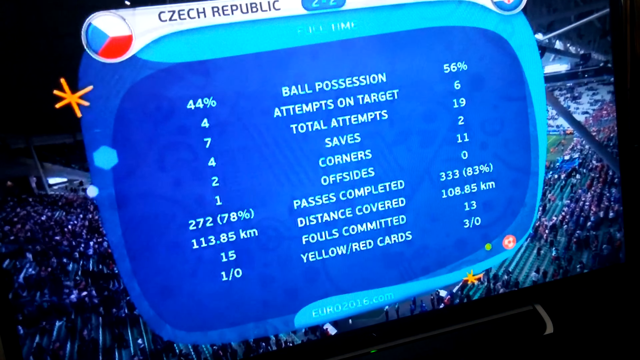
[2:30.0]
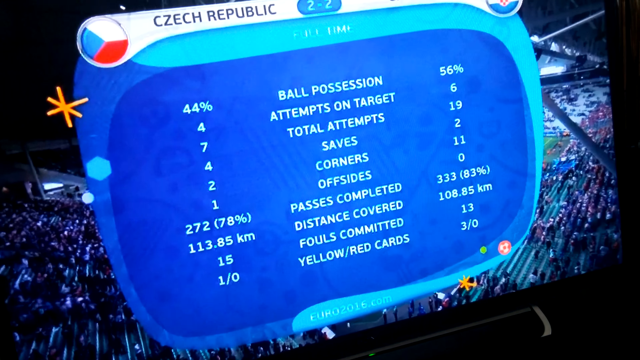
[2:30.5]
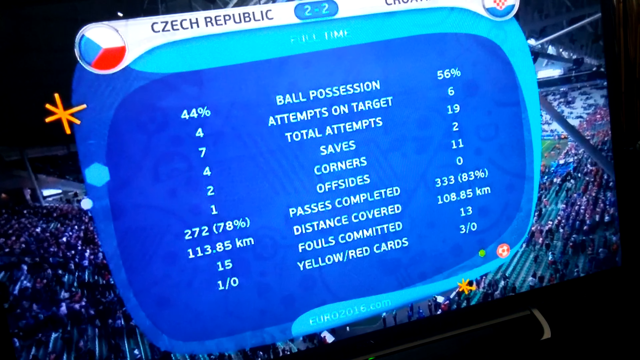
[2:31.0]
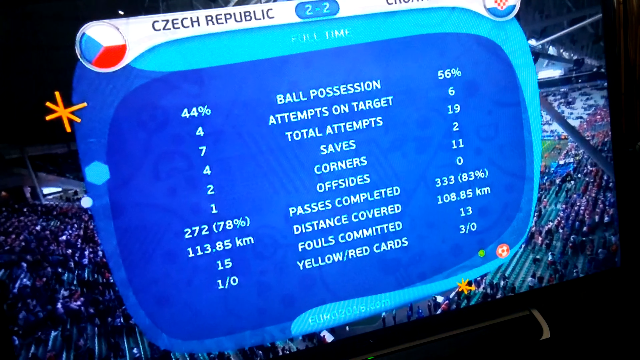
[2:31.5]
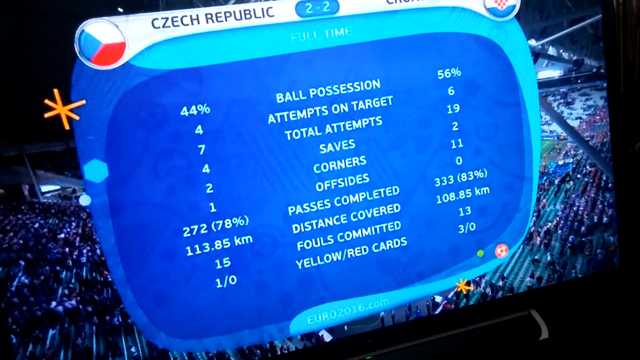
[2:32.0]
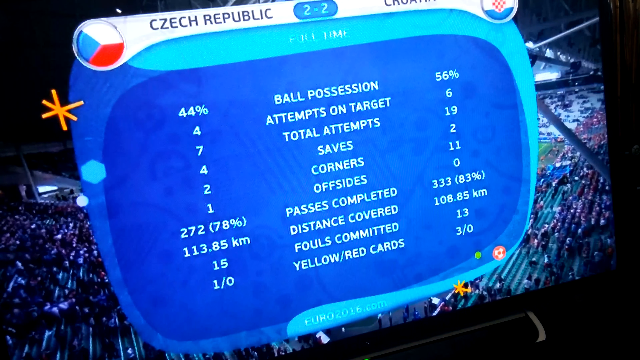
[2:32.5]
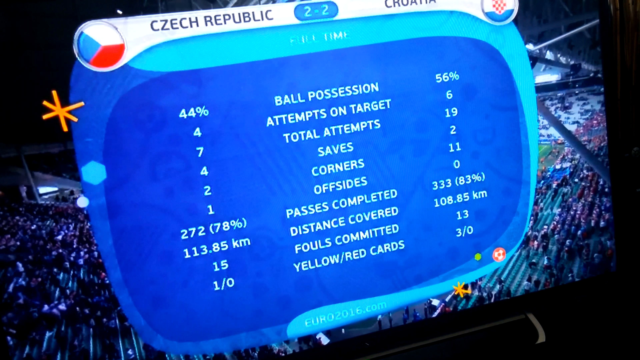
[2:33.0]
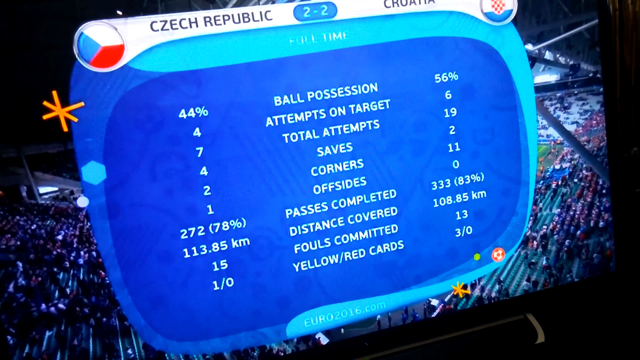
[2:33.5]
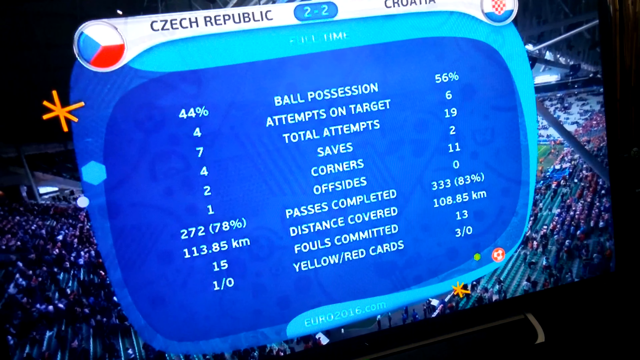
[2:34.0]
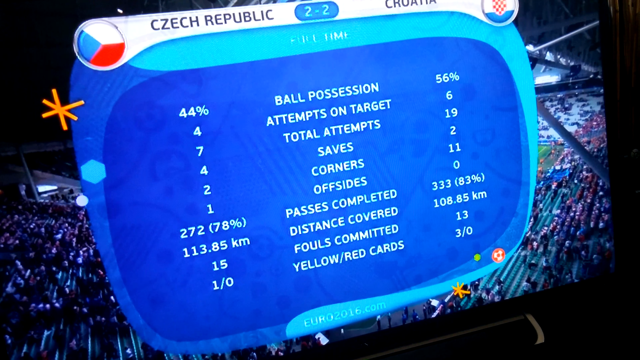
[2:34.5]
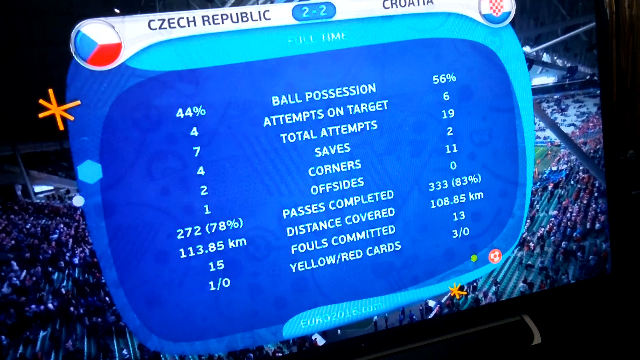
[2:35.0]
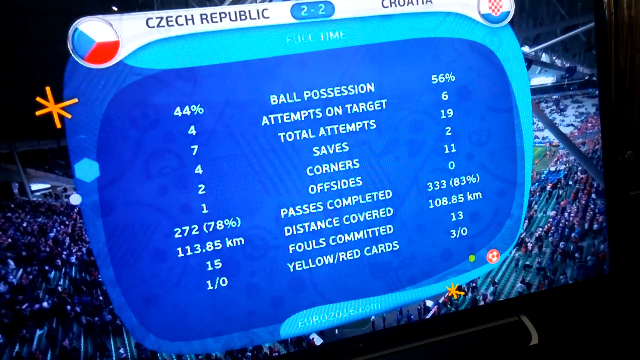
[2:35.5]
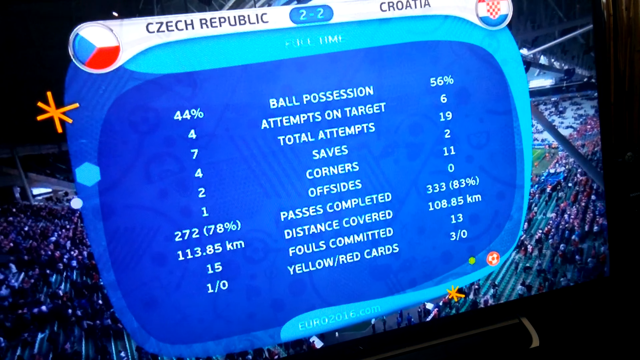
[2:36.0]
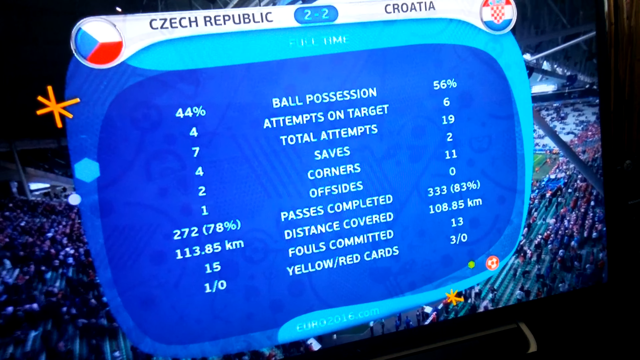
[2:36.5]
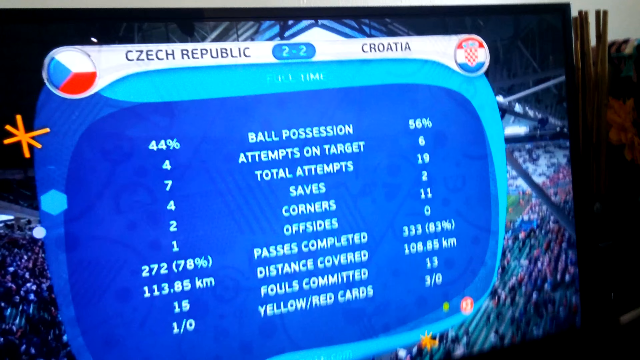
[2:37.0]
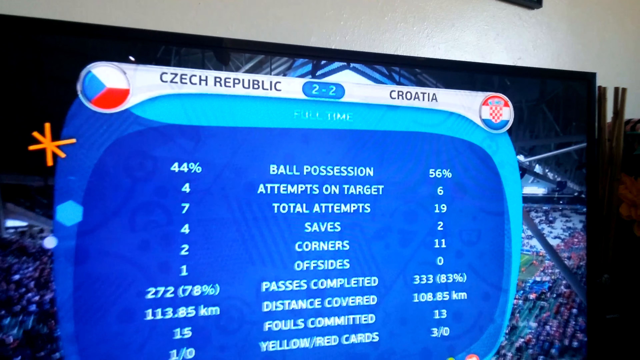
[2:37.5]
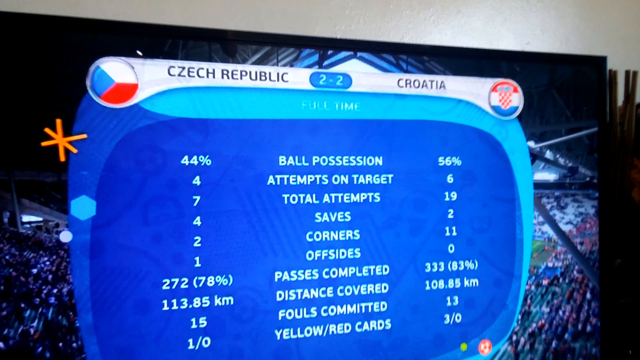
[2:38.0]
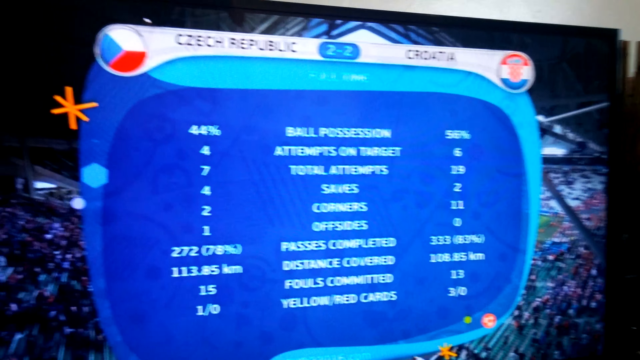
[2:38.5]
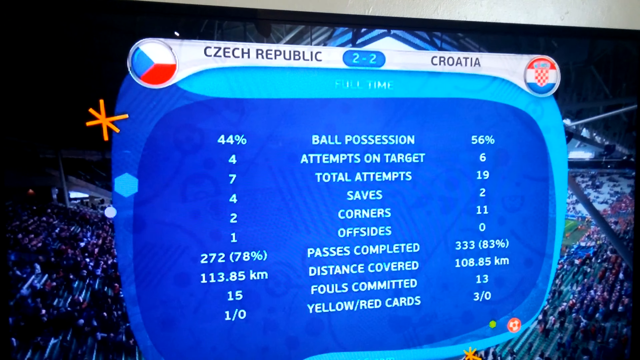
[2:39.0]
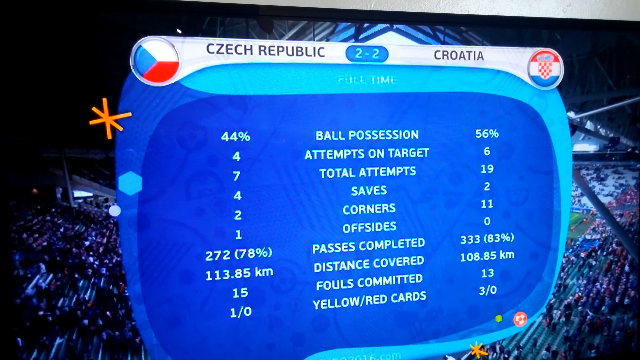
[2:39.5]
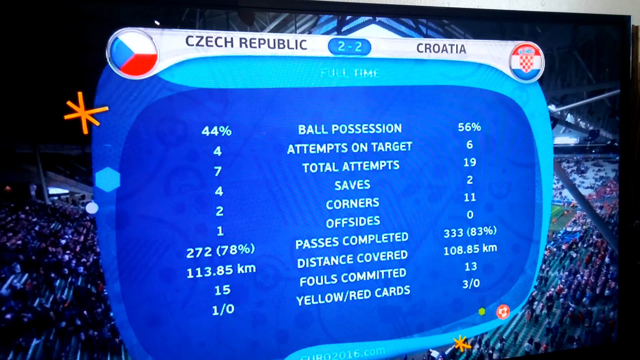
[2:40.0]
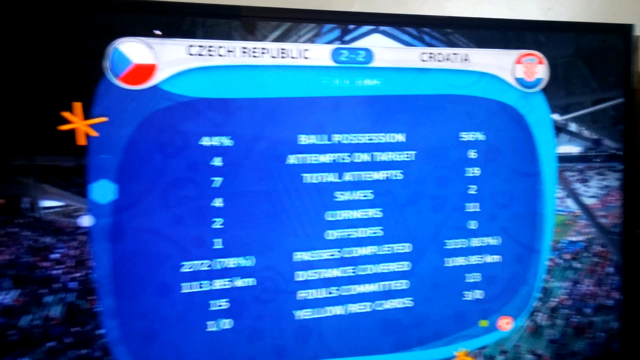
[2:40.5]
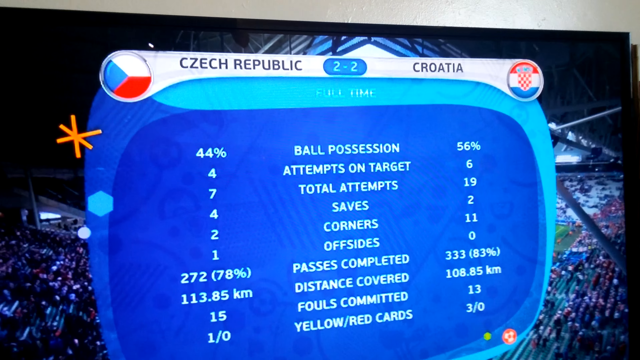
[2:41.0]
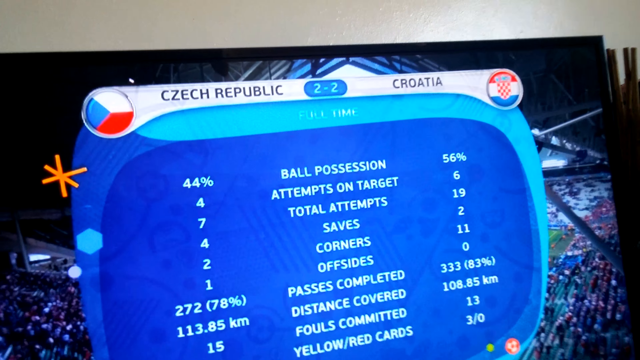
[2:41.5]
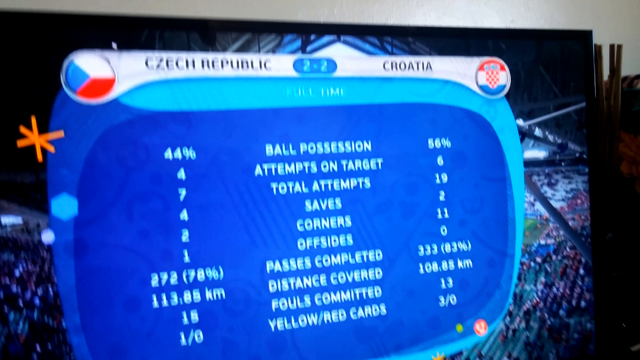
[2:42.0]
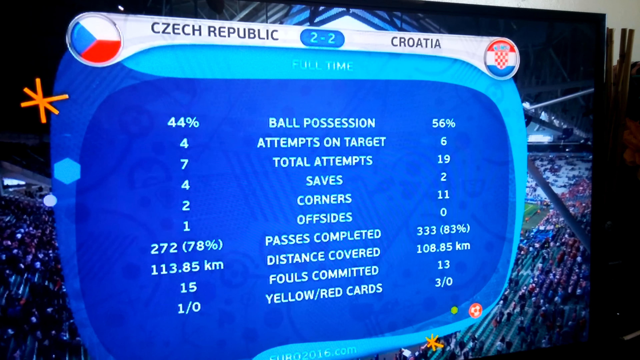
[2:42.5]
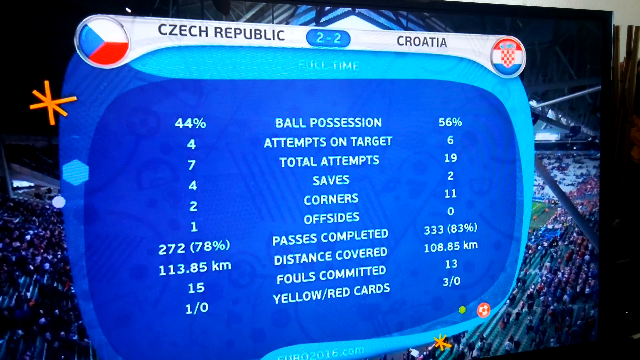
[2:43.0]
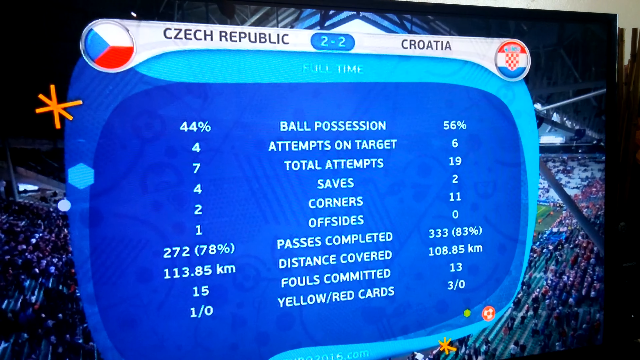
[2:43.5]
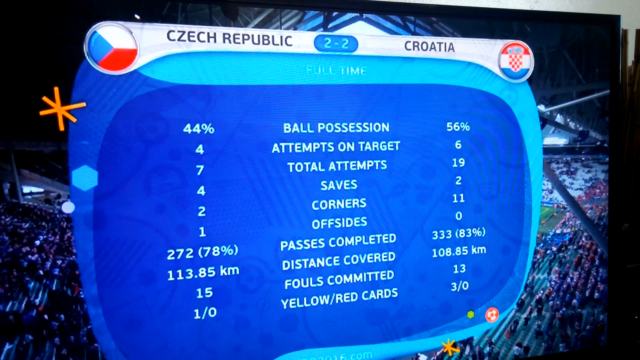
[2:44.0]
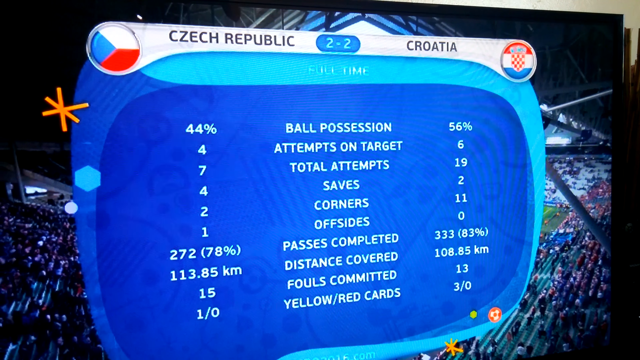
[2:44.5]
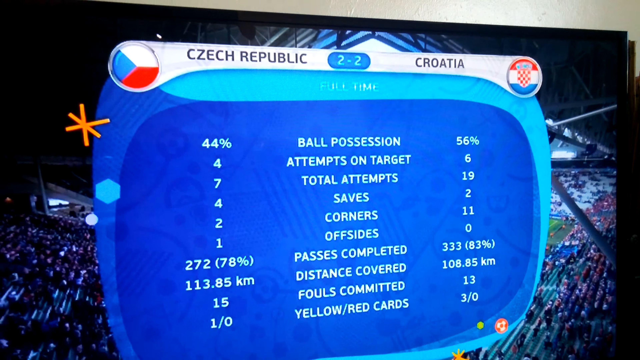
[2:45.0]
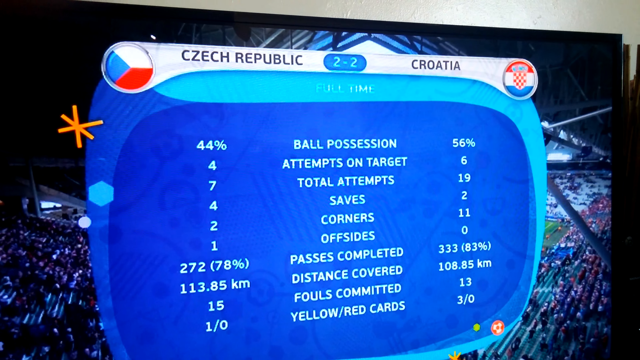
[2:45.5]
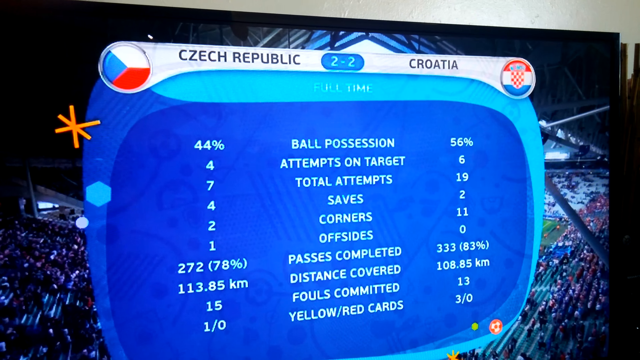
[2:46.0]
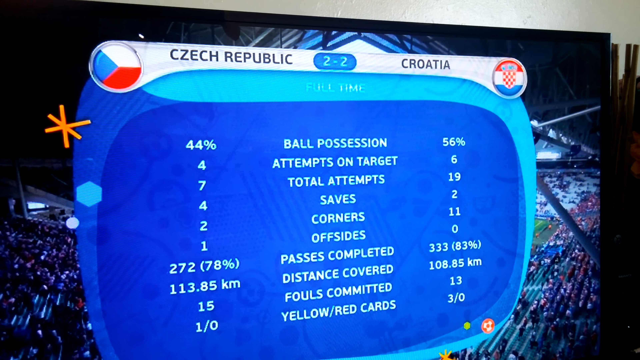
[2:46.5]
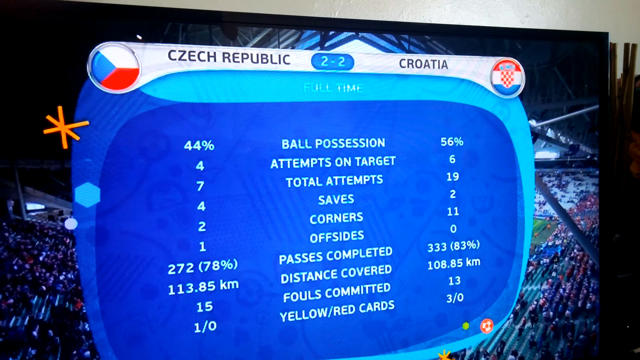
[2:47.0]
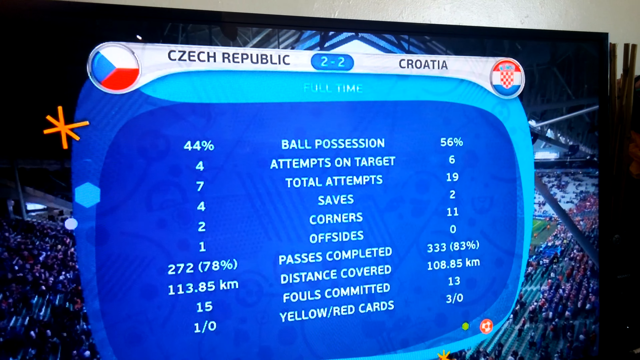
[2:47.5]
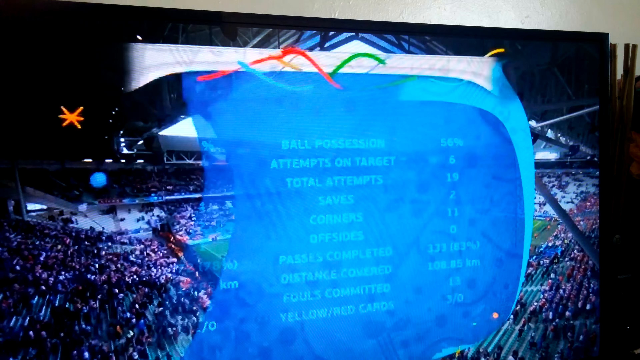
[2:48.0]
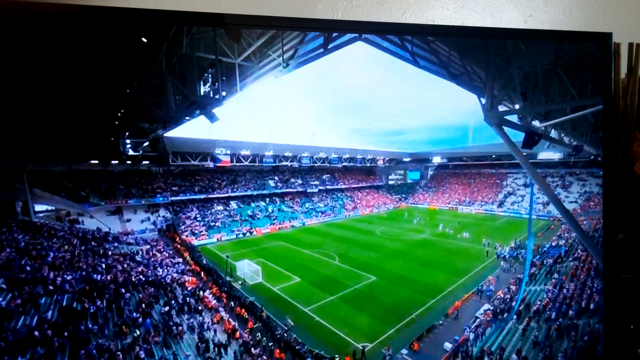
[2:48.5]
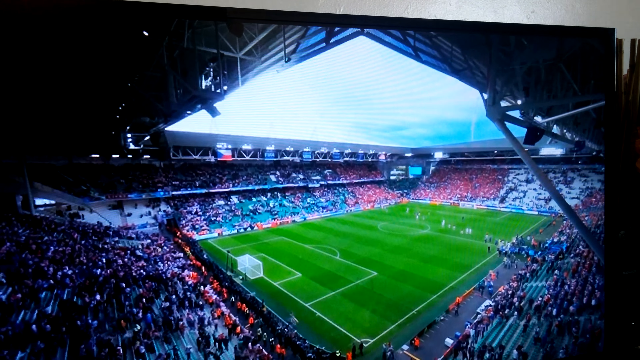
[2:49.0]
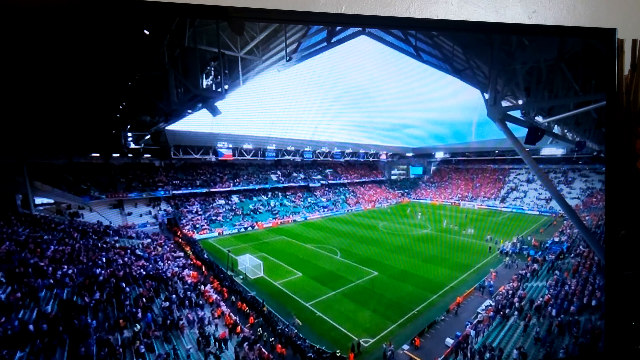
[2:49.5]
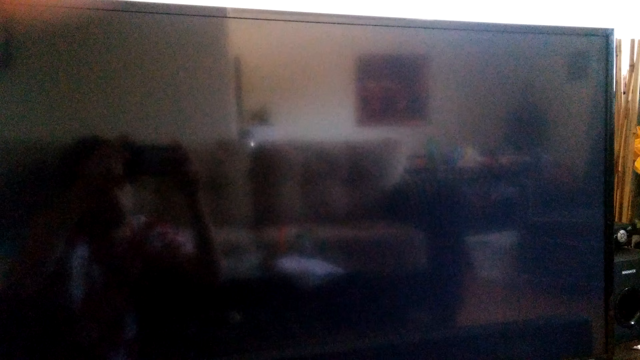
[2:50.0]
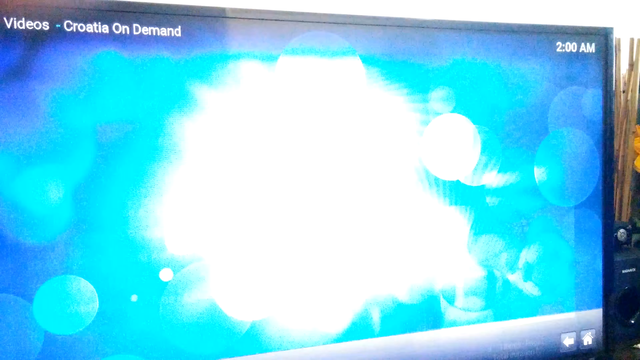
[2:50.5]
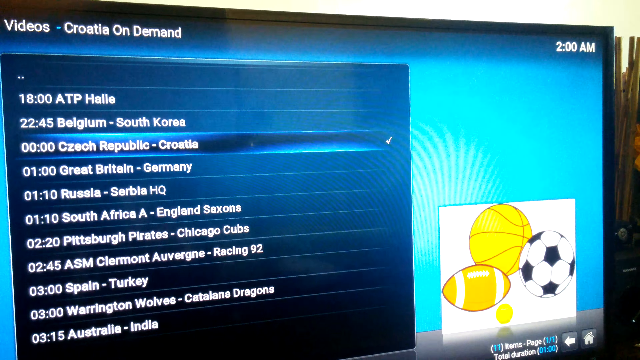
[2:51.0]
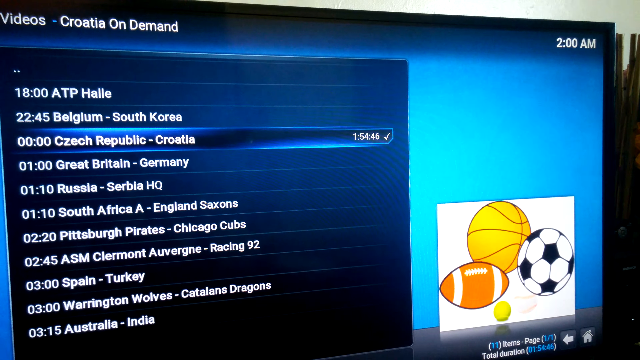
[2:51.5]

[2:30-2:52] A computerized monitor is on the screen of a television that someone is filming. The television shows statistics on a blue computer graphic that looks like a monitor. It reads "Czech Republic" in the top left, a score of "2-2", and "Croatia" on the right side, with a Czech Republic flag on the left and a Croatia flag on the right. Stats are listed on the left and right sides, with categories in the center: ball possession, attempts on target, total attempts, saves, corners, offsides, passes completed, distance covered, fouls committed, and yellow and red cards. This stays on the screen for a bit. Behind the monitor are some people in the stadium; the game looks like it is over, and people walk off the screen. The person's television screen is then shown briefly with some different channels they could watch, and the stadium is shown as people start to clear out of the soccer field.